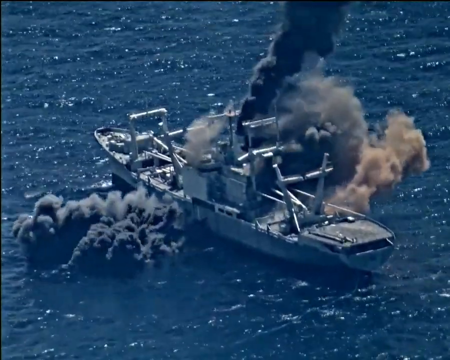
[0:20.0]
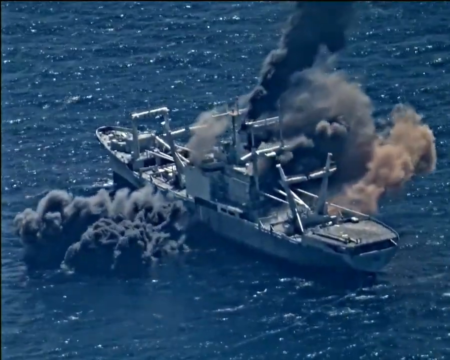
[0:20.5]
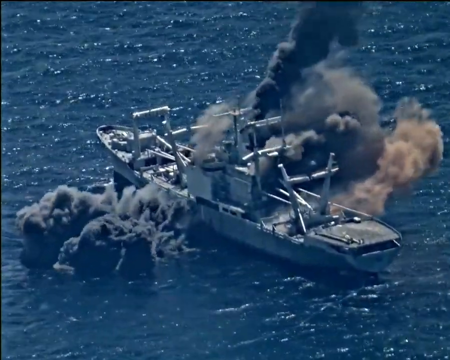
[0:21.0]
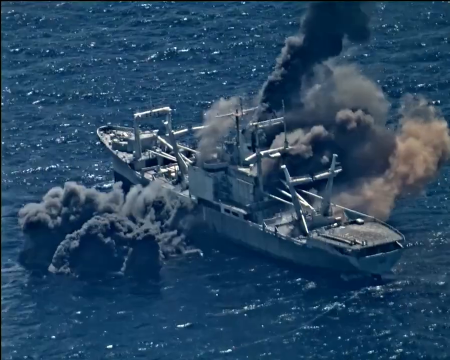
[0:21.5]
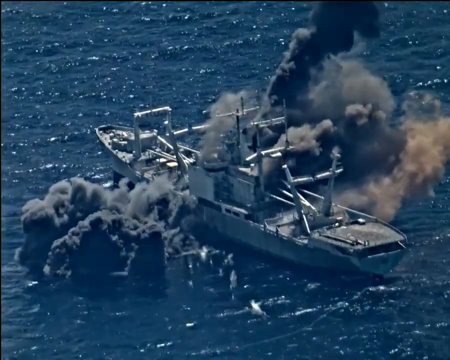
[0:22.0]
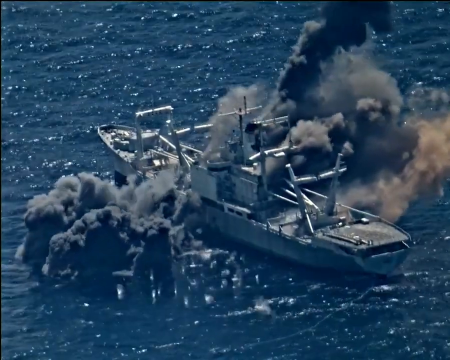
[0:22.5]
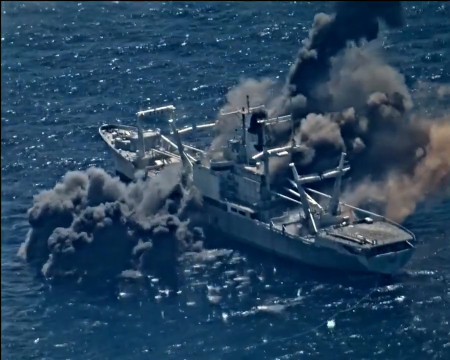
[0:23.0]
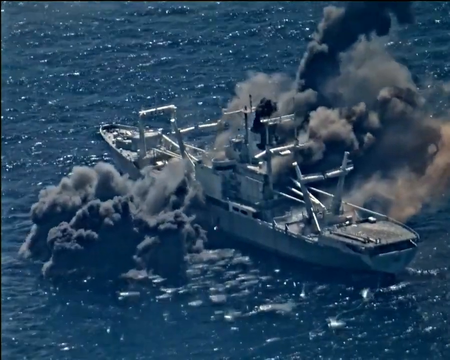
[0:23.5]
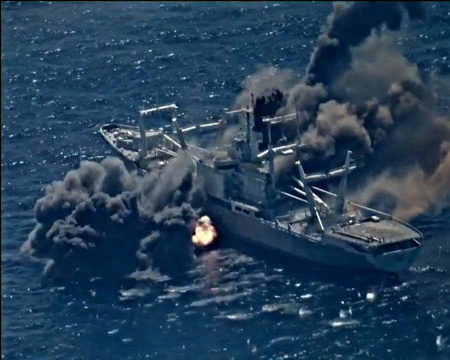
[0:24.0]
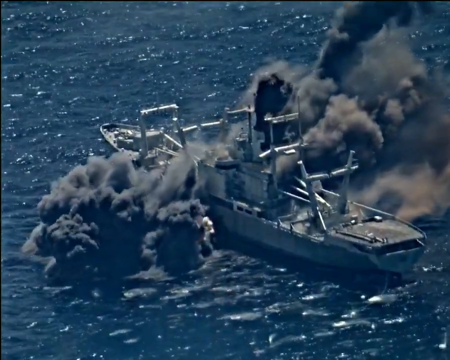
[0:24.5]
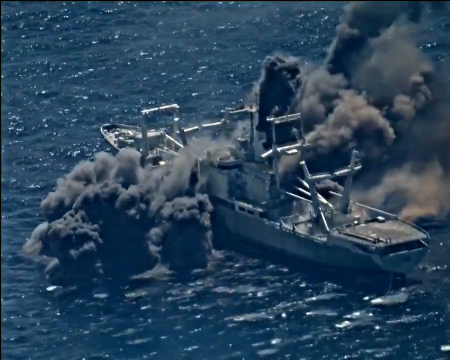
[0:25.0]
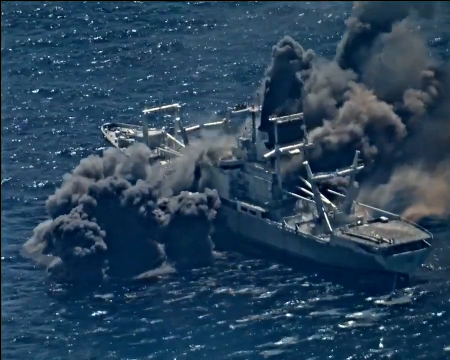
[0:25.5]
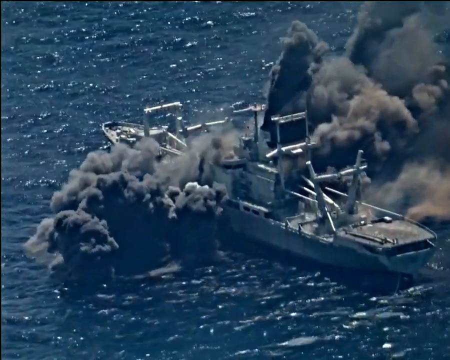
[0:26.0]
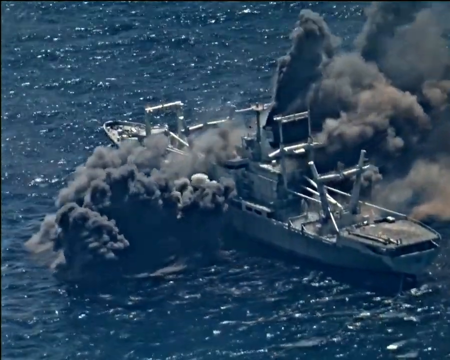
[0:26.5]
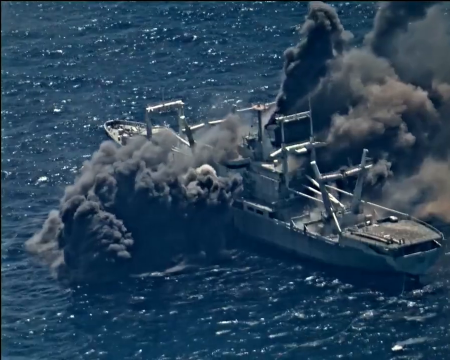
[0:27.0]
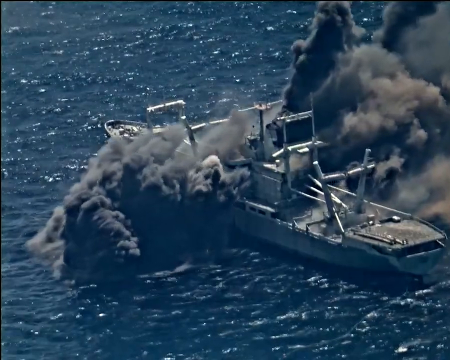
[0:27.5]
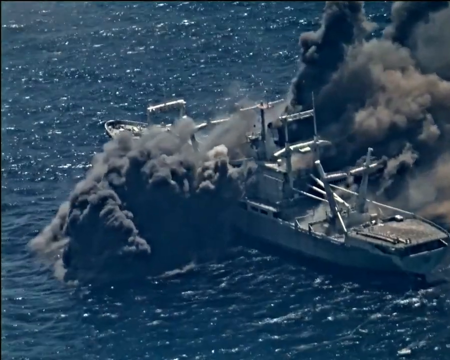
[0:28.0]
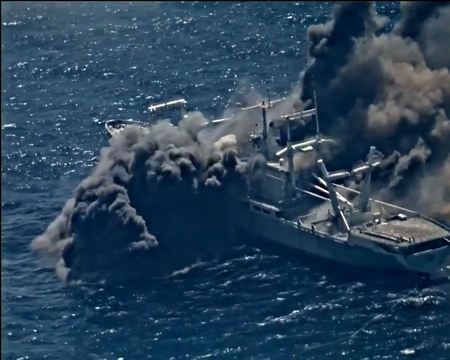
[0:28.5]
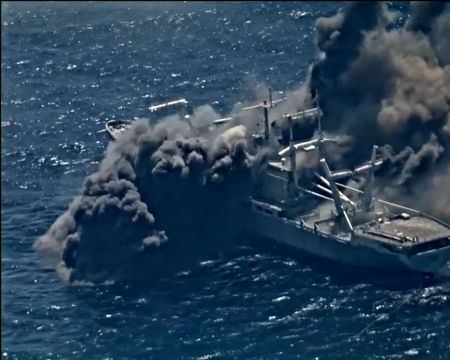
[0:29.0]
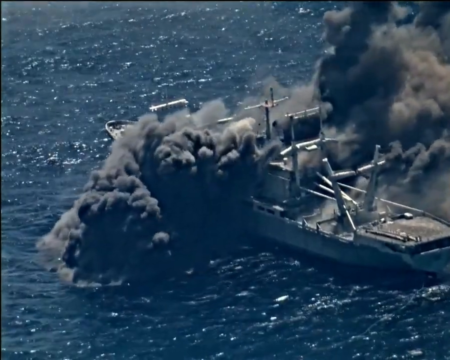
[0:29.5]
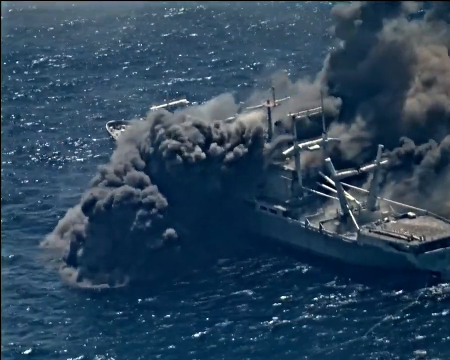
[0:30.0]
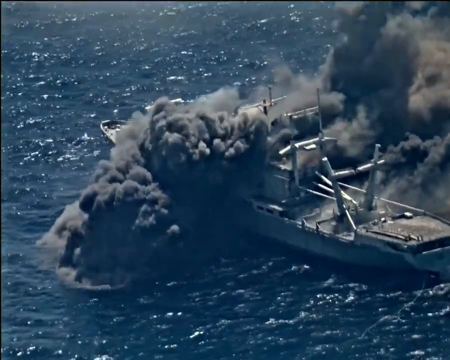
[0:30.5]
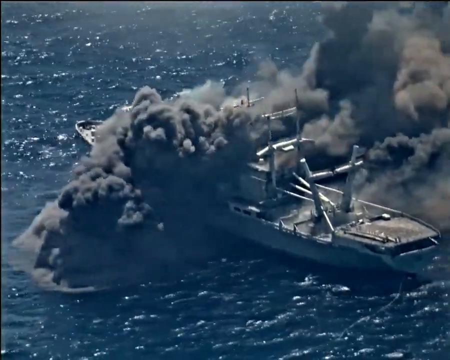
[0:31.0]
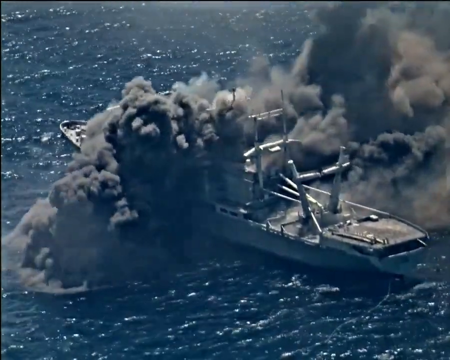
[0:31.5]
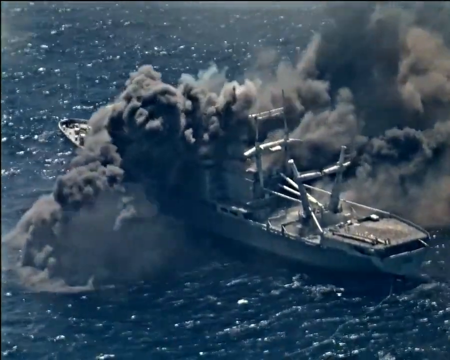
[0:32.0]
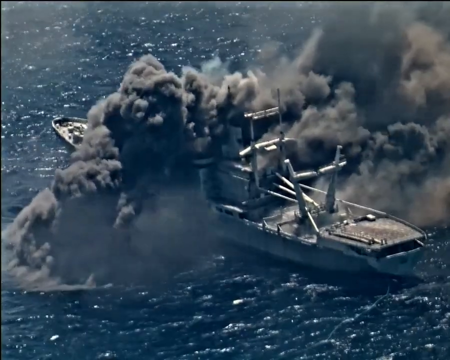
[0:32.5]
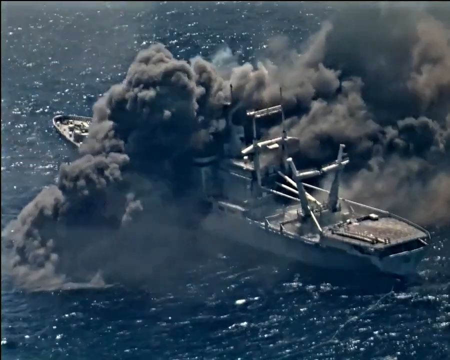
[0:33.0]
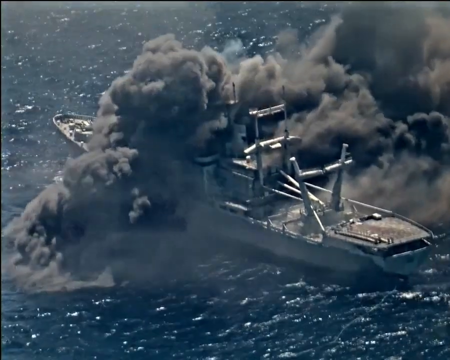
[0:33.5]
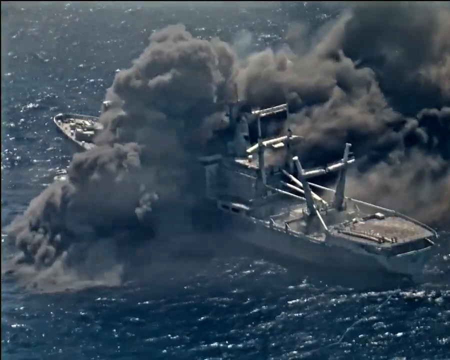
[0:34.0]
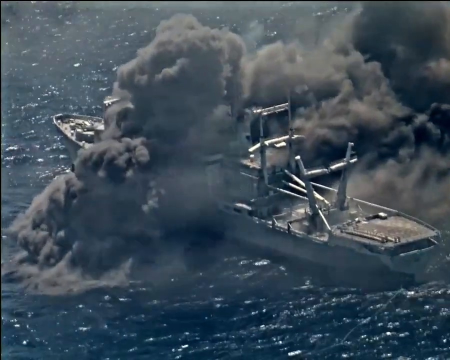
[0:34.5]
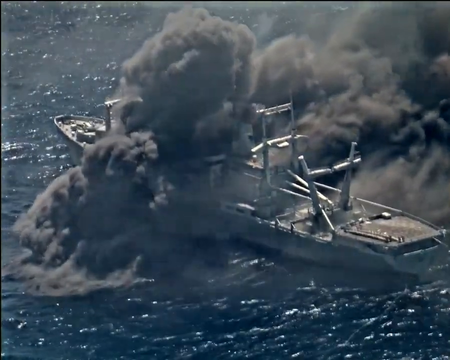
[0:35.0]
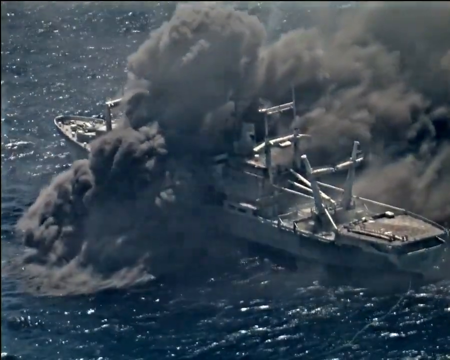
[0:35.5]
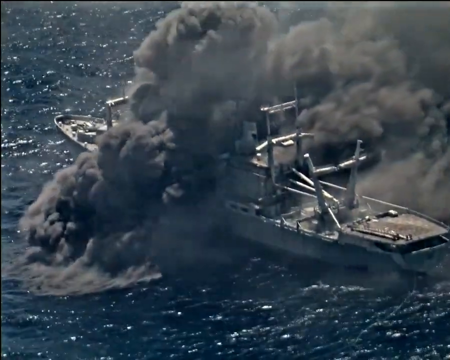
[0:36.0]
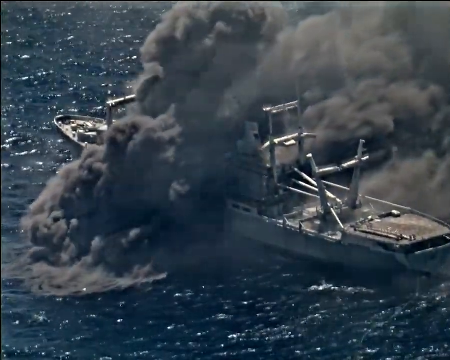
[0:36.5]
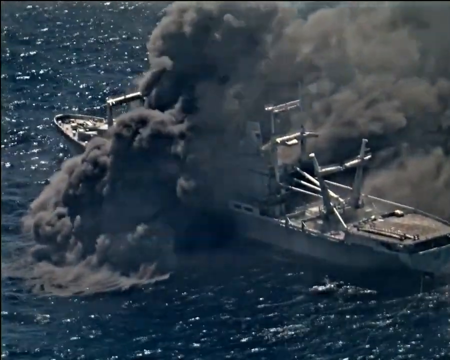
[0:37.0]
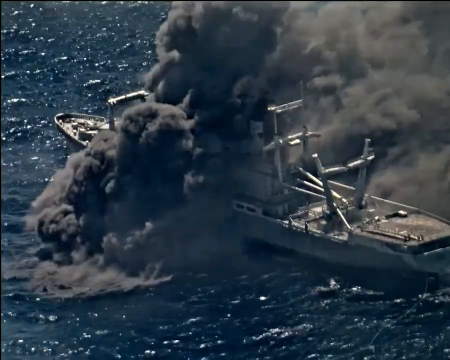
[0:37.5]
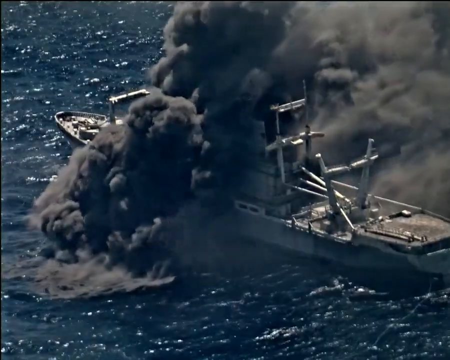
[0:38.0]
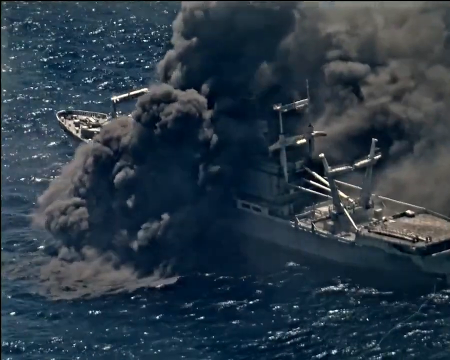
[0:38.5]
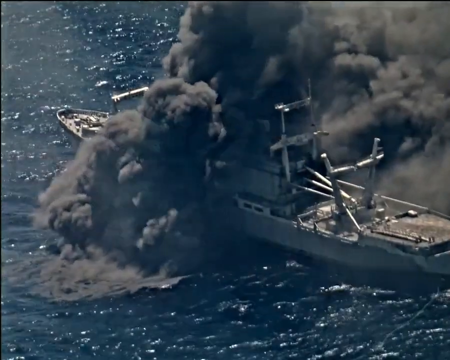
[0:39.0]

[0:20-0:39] A closer view of the explosions, which have already started, shows quite large clouds of black smoke billowing out of the sides and the top. Another explosion happens on the left-hand side, with visible fire as it explodes. The ship still does not really look like it is moving; it is being totally engulfed in a giant cloud of black smoke. The rear end possibly starts to sink down, though it is unclear. Then another explosion occurs, and almost the whole front end and middle of the ship is engulfed in smoke, with only the very tip of the front still visible through quite a lot of smoke.